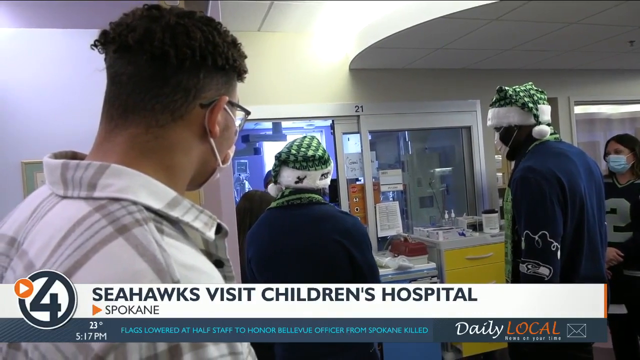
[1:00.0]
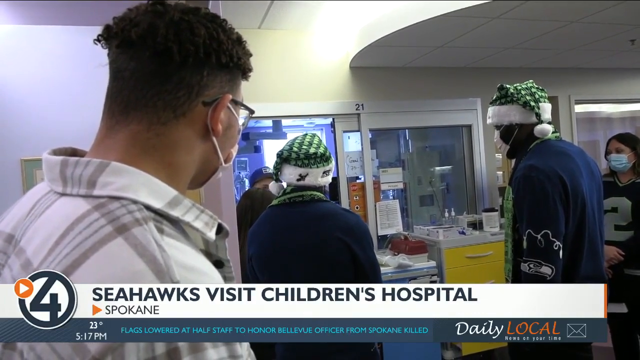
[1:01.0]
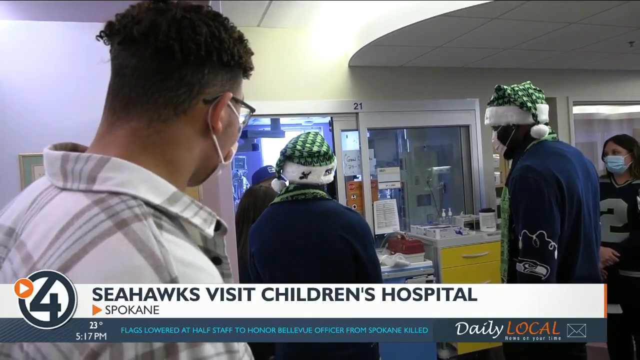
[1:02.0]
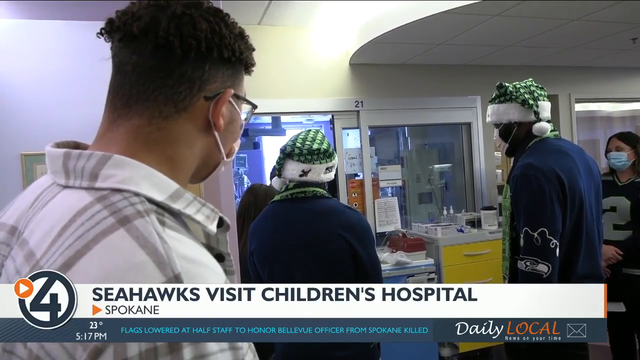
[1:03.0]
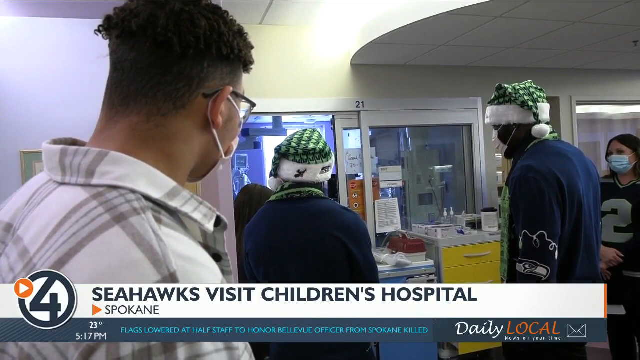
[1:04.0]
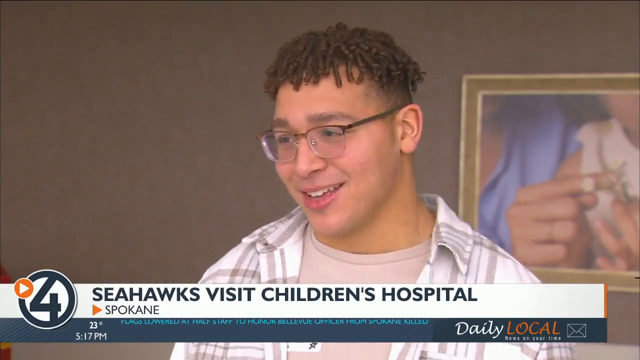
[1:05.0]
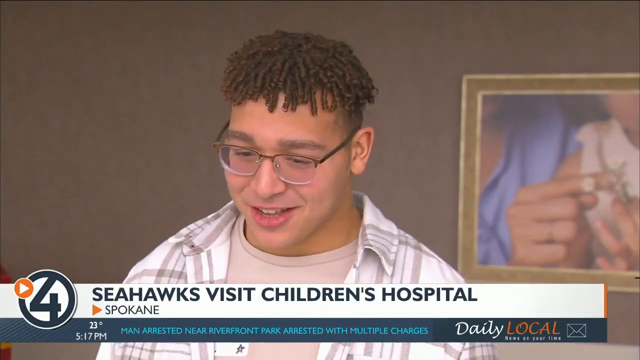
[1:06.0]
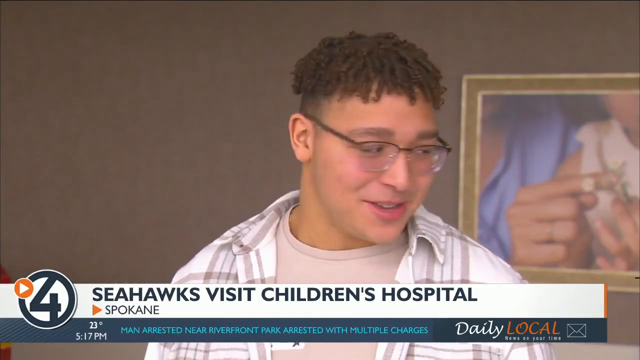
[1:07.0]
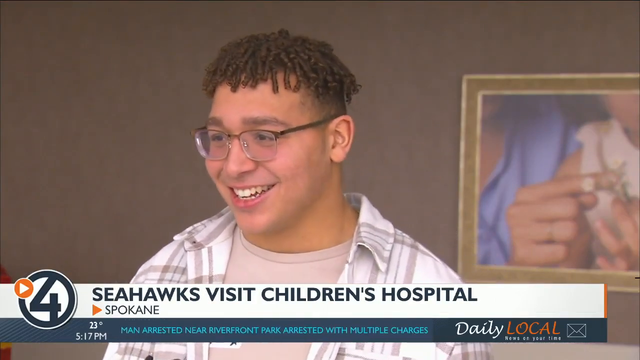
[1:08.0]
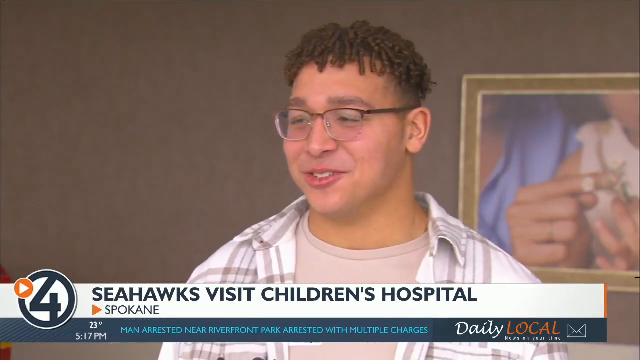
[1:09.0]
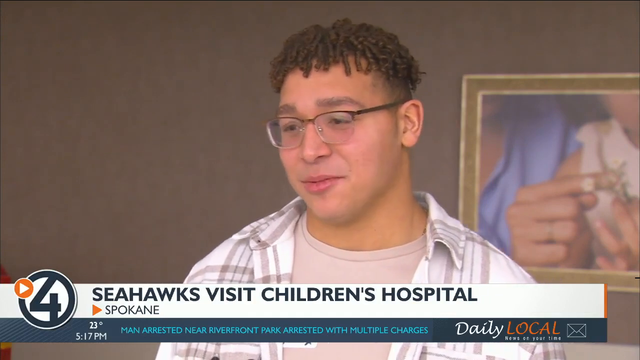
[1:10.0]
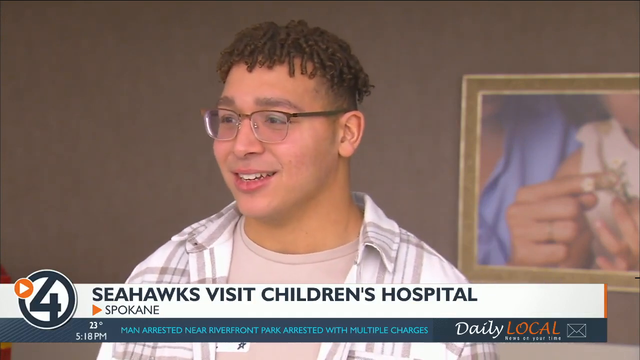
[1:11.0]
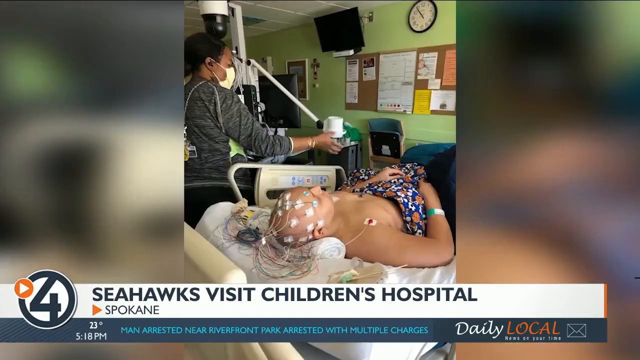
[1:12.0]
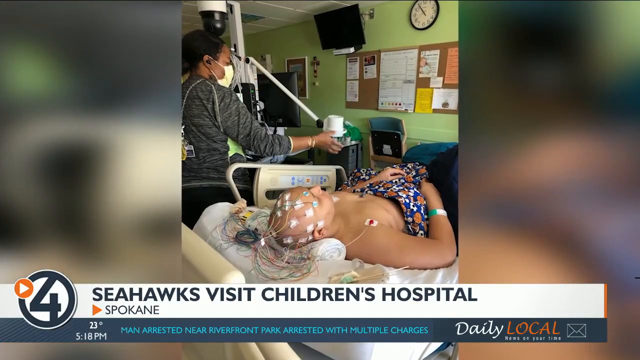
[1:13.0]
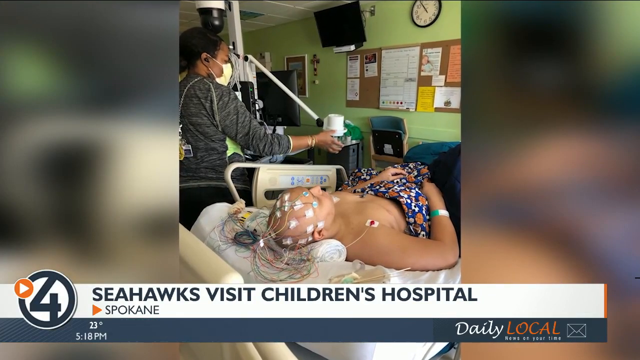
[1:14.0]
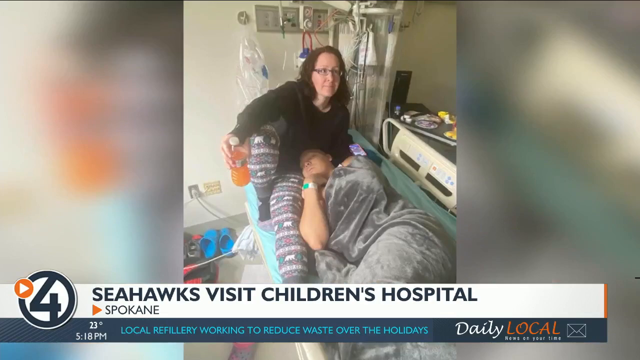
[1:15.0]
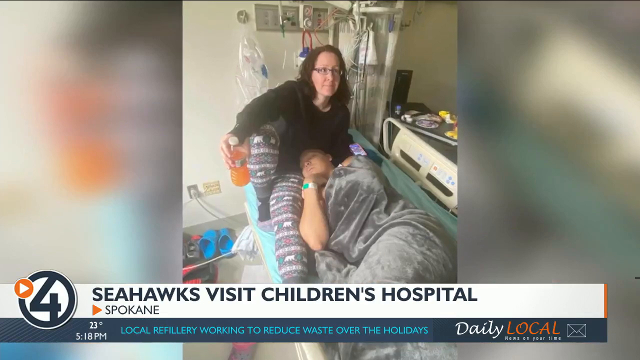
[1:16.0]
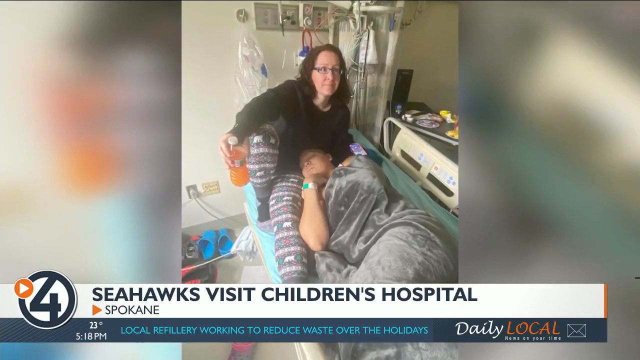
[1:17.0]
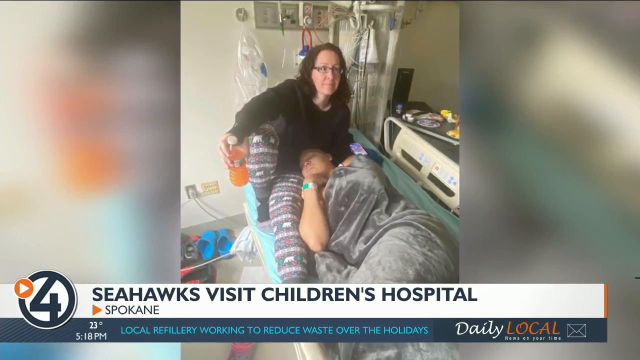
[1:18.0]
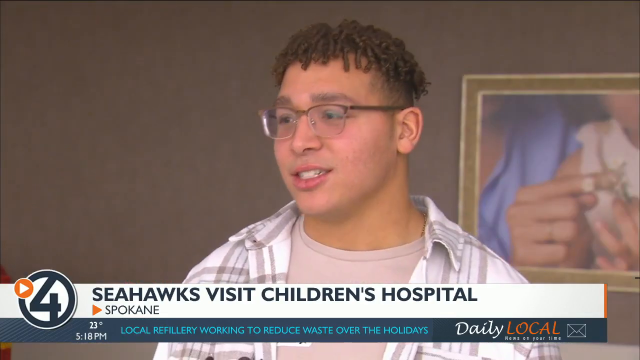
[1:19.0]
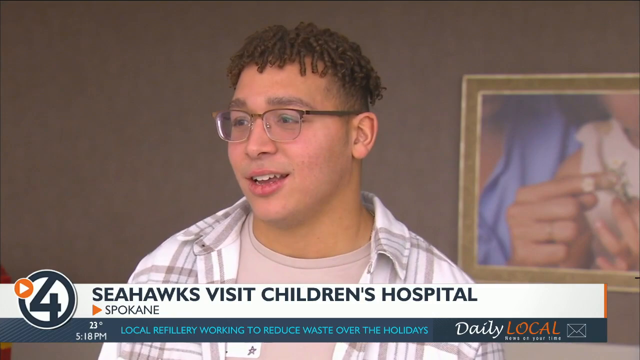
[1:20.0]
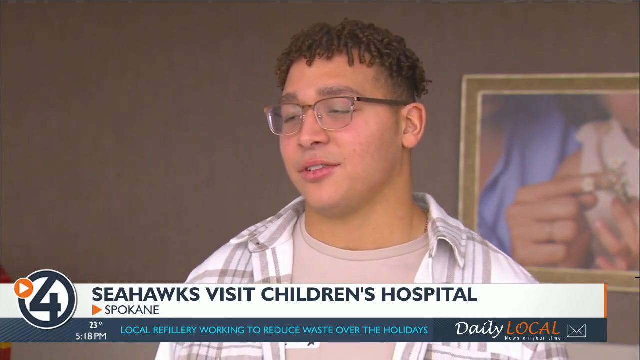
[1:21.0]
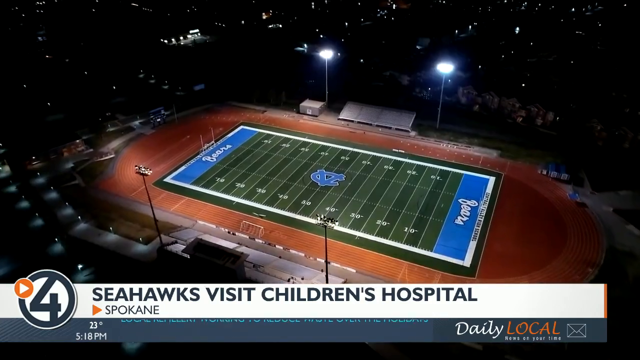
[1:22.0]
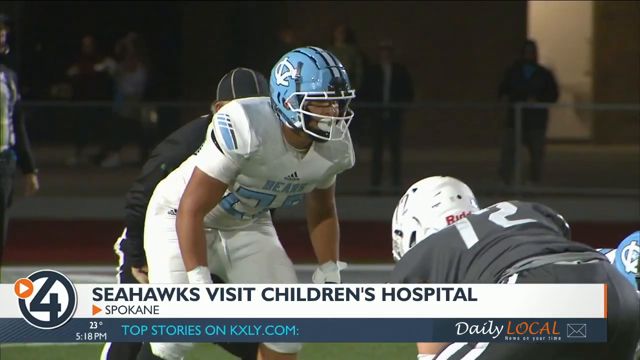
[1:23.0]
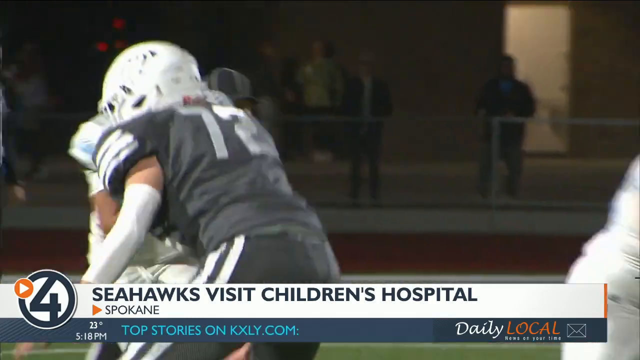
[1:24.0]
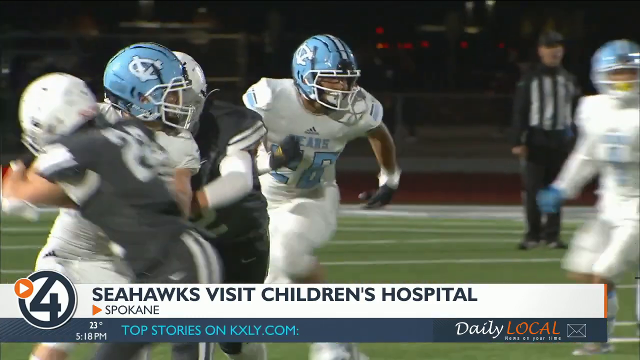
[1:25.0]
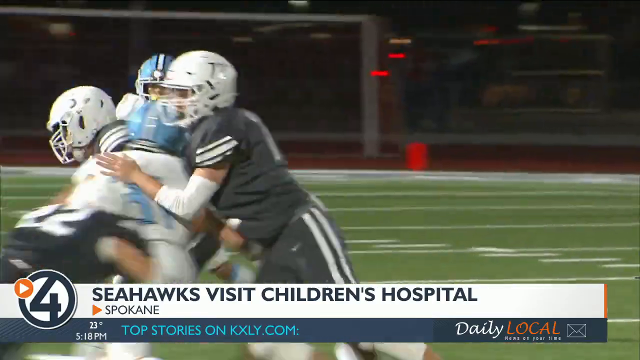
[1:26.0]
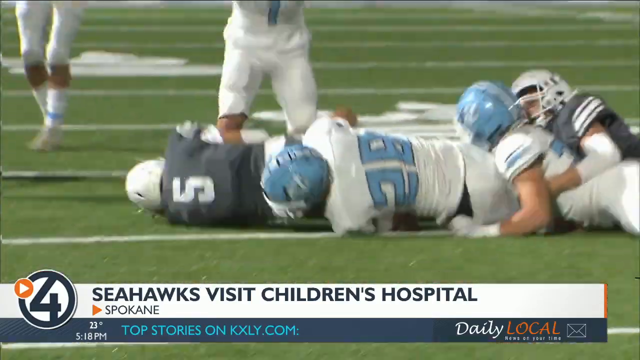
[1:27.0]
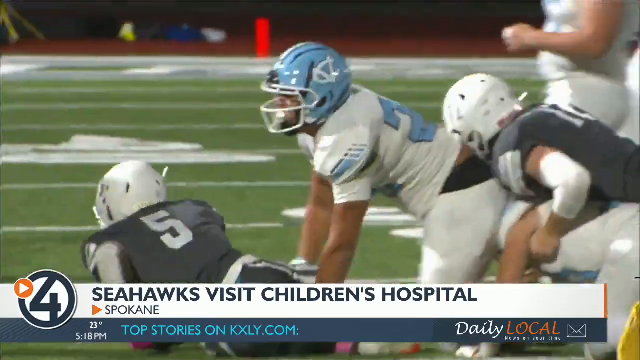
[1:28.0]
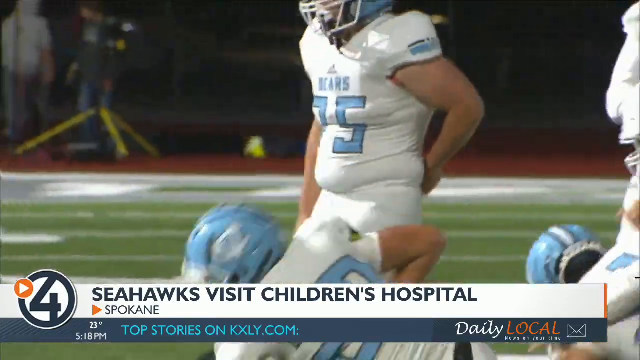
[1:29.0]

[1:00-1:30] An individual is interviewed inside the hospital. He does not appear to be a player for the Seattle Seahawks or any other NFL team; he appears to be a fan or possibly a visitor, young, probably between 17 and 21. He wears glasses and casual clothing and appears to smile and be very happy as he describes the experience. The video cuts to a person lying in a bed with many attachments to his body, particularly on the head; this patient is presumably the one being interviewed. Another segment shows the patient in the bed of a hospital room being assisted by a female attendant, possibly a nurse. A lit-up football field is then shown at nighttime, with blue in the end zones and a blue emblem in the center; the team name appears to be Bears. Live action shows the team in blue wearing white jerseys tackling a player wearing black, apparently from the opposing team.